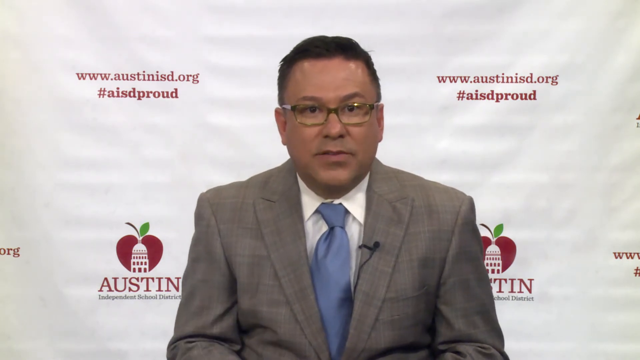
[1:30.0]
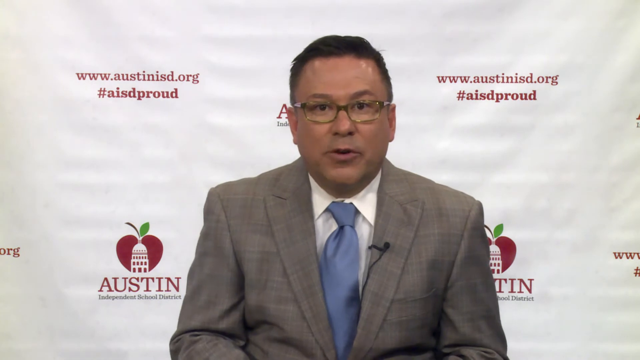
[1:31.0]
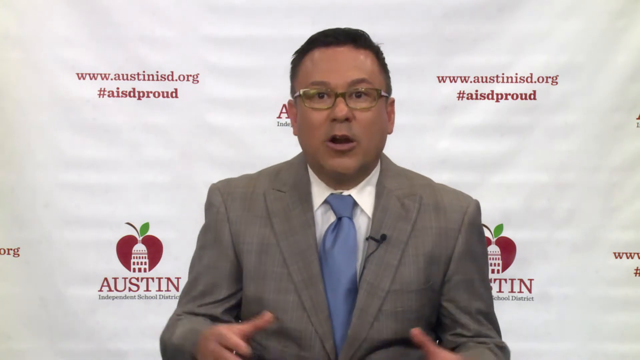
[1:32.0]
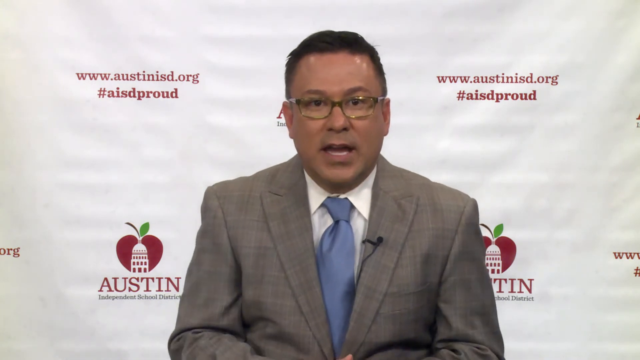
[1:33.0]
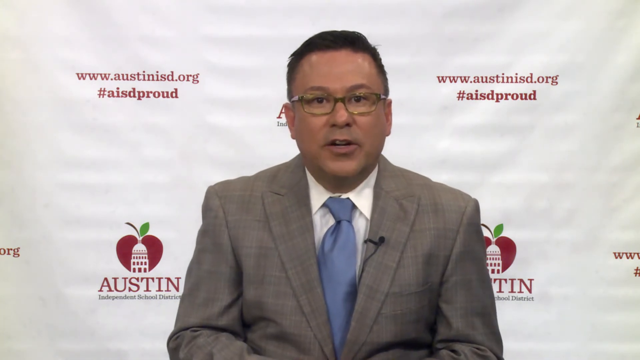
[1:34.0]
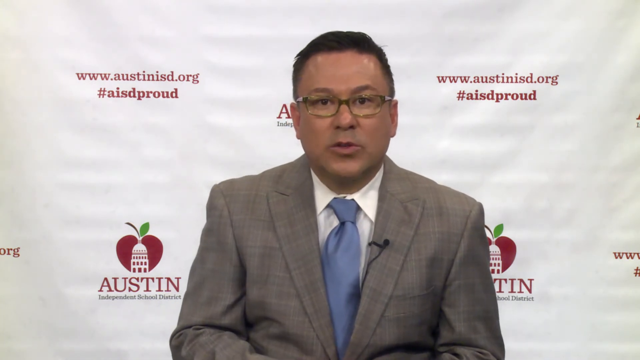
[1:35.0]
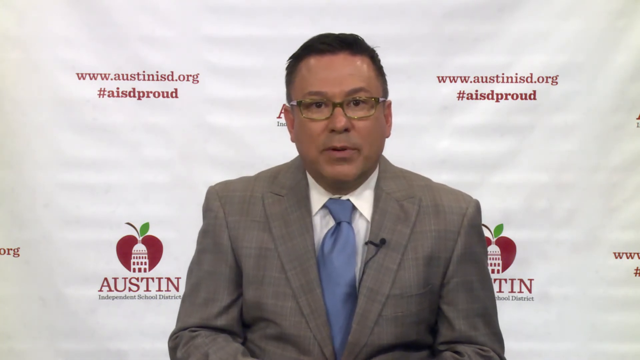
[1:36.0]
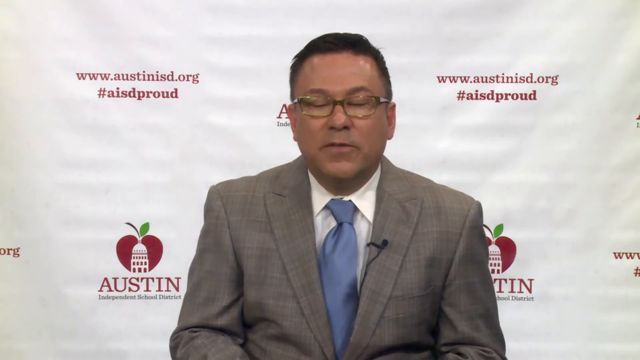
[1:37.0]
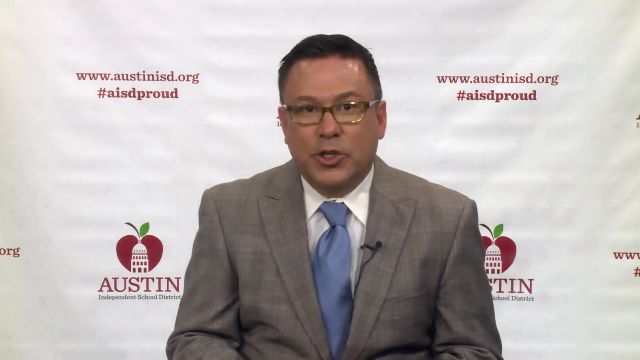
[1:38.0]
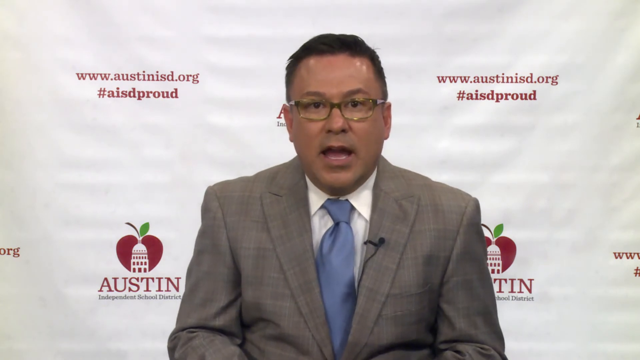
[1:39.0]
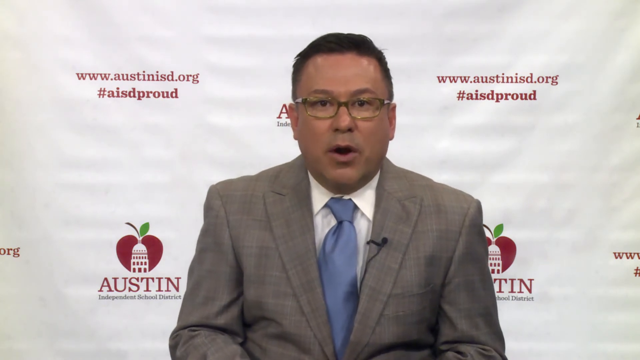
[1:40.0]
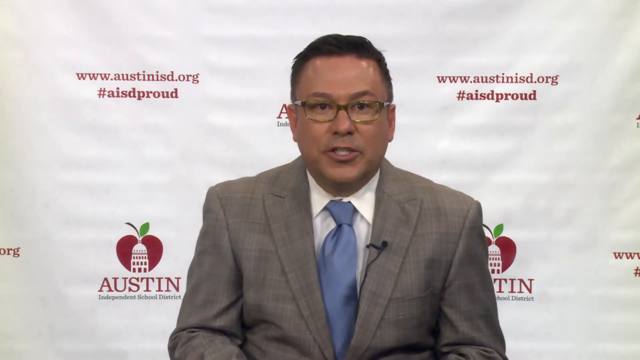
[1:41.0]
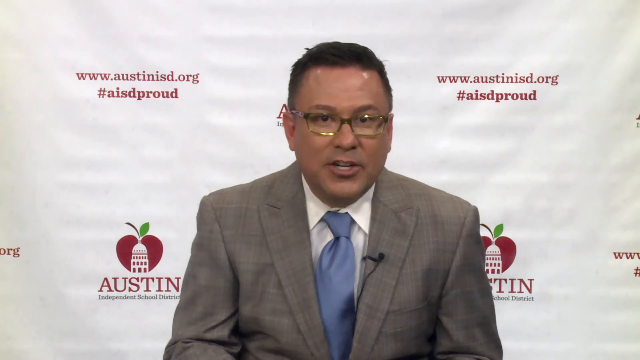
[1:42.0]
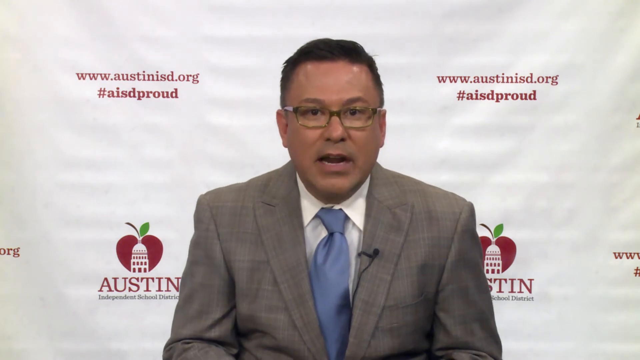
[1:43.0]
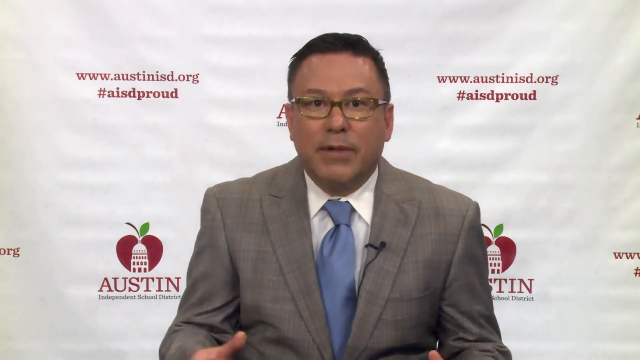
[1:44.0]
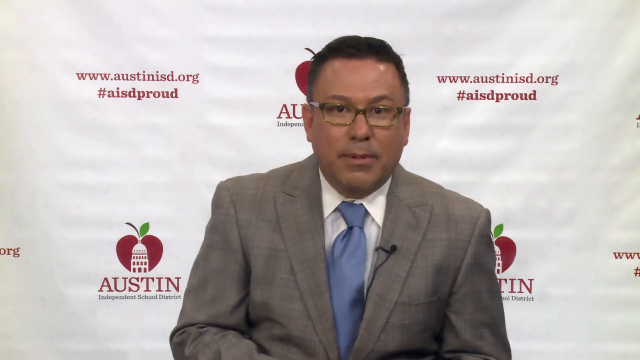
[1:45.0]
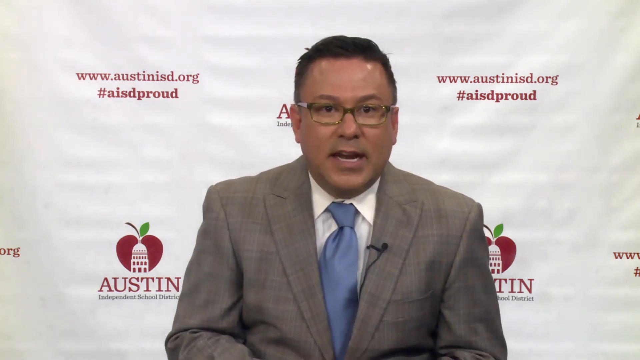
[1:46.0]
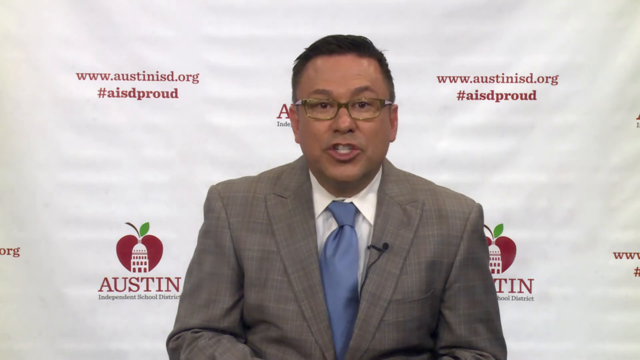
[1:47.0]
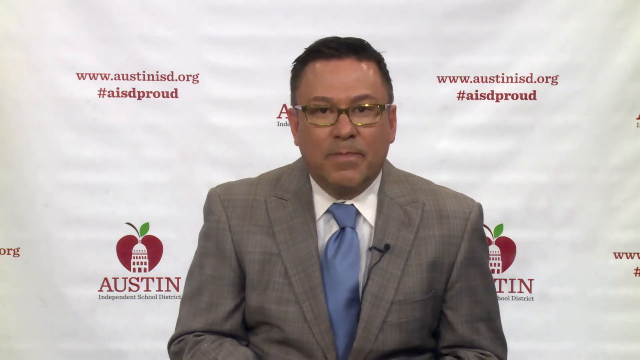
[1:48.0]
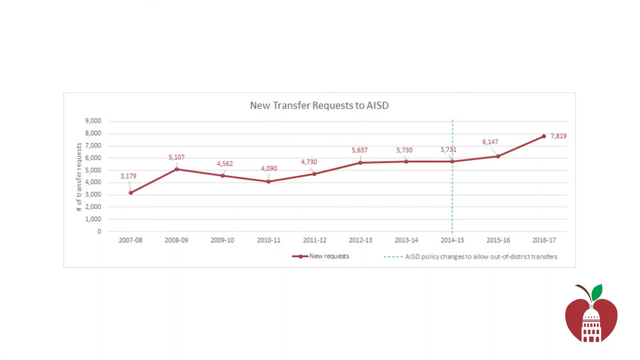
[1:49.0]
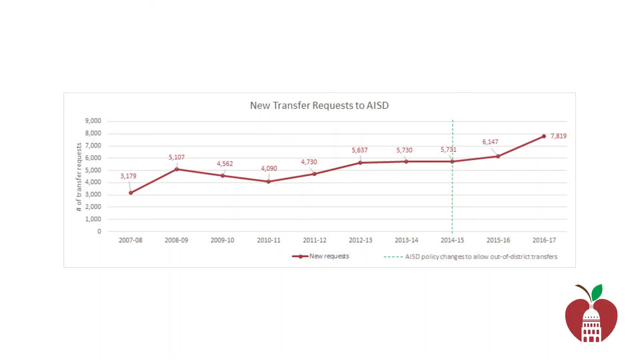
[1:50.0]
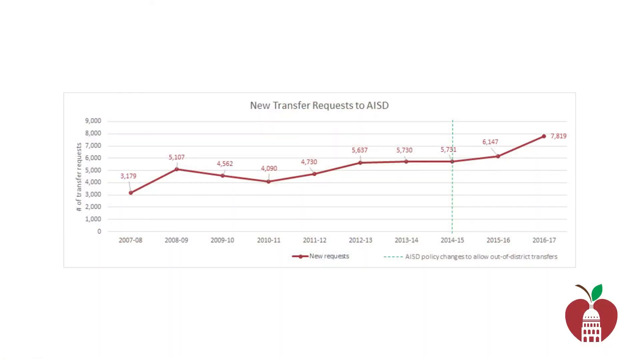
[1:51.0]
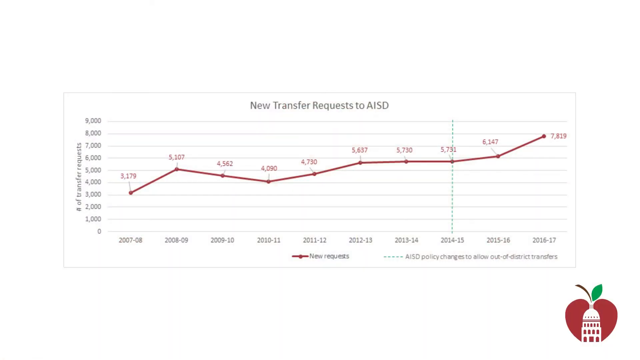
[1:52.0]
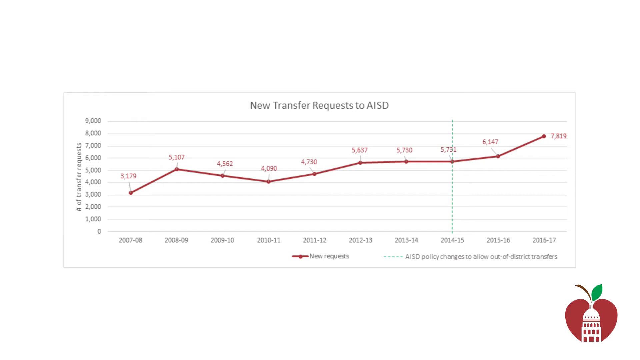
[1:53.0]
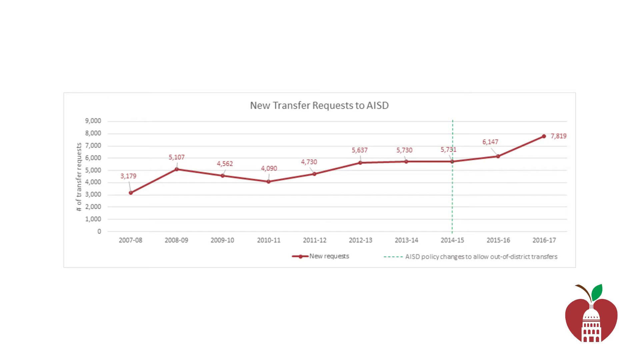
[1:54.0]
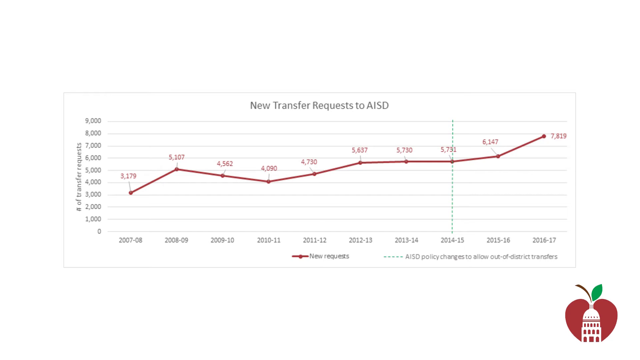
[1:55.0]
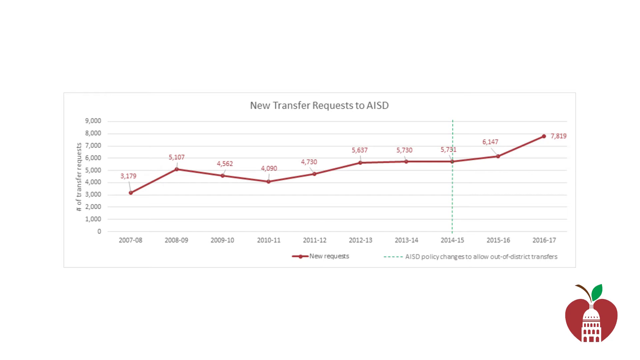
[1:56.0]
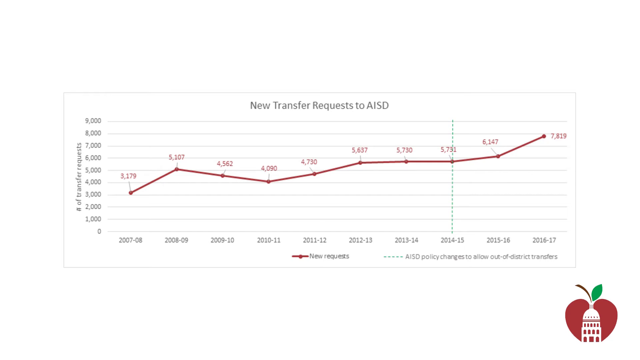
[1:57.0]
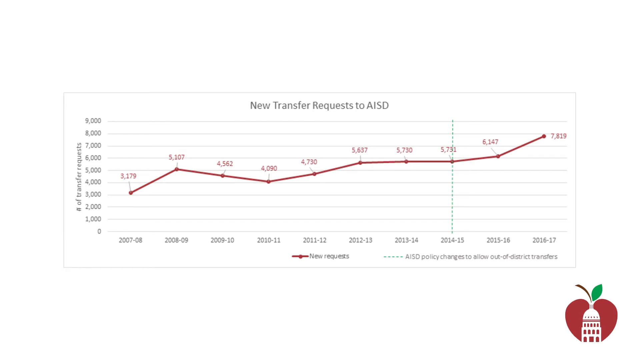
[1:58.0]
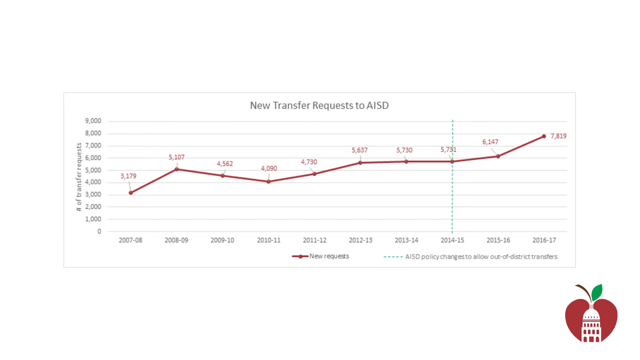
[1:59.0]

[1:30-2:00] A man talks in front of the camera, wearing something like a gray jacket or blazer, a white shirt and a blue tie, with a small microphone attached to the inside of the jacket, and glasses. He looks like a superintendent or something similar. The white background behind him reads "Austin Independent School District." He talks with his hands a lot and takes up most of the frame. A chart then appears reading "new transfer request to AISD from 2007 to 2017," showing the number of transfer requests. It seems to start at a little over 3,000 and rise to almost 8,000 transfer requests per year.